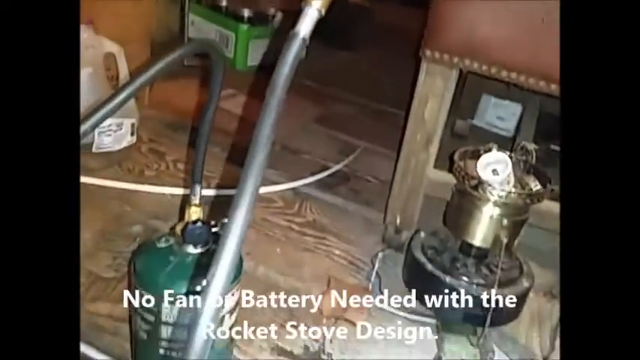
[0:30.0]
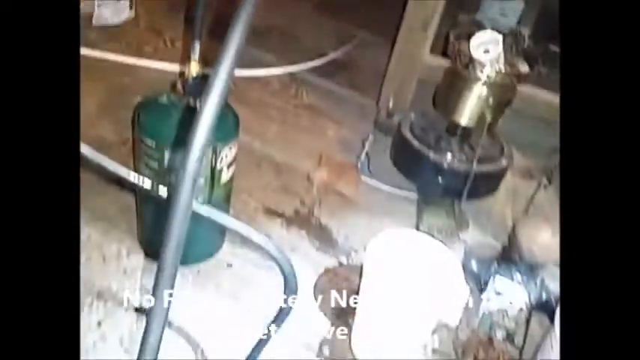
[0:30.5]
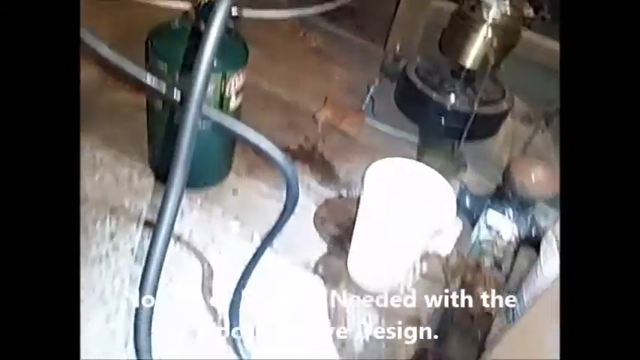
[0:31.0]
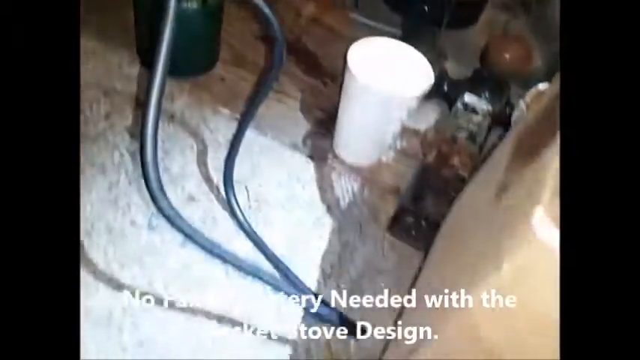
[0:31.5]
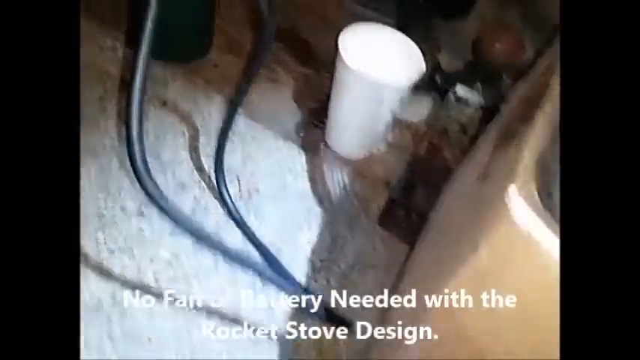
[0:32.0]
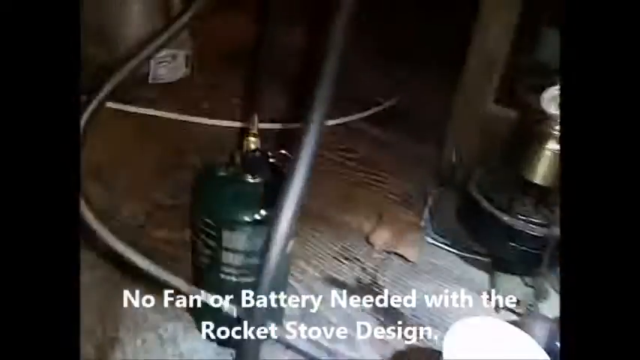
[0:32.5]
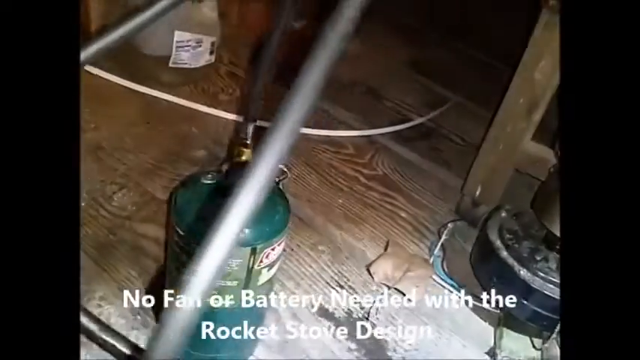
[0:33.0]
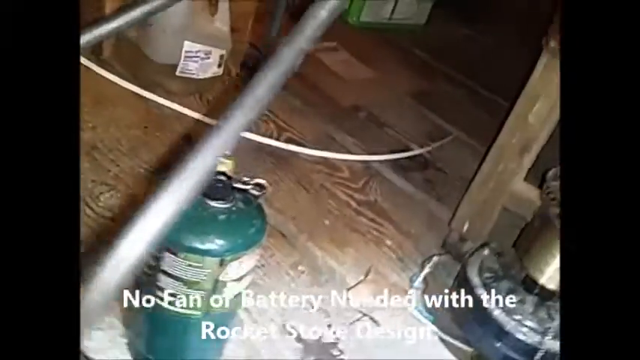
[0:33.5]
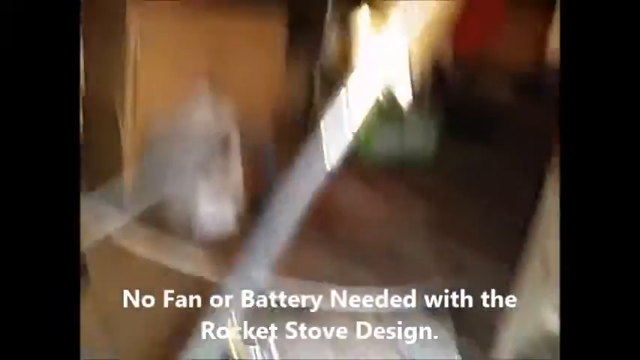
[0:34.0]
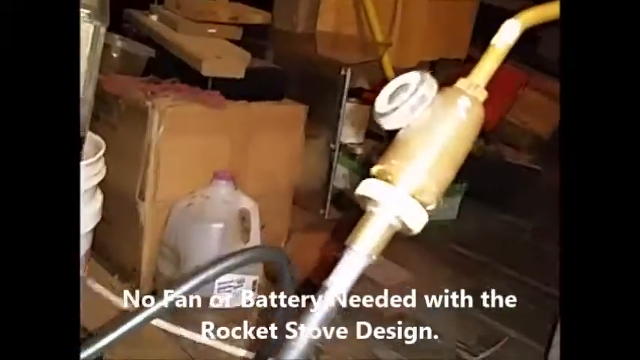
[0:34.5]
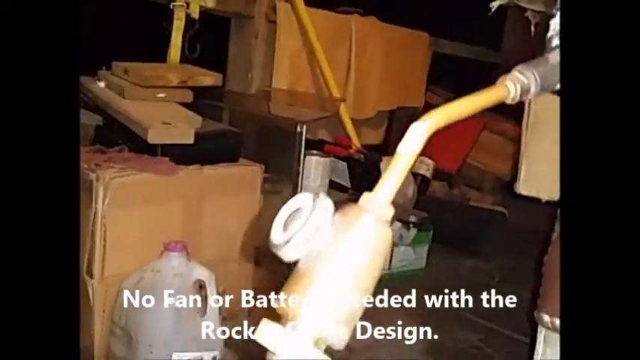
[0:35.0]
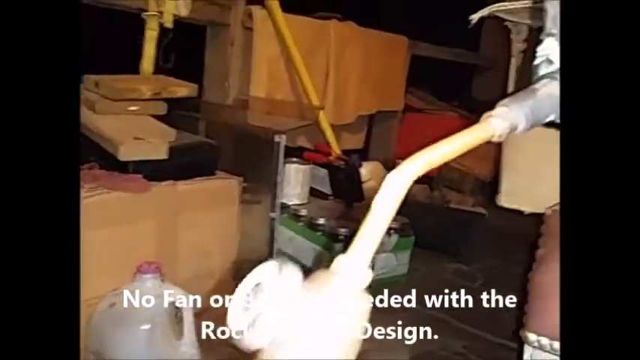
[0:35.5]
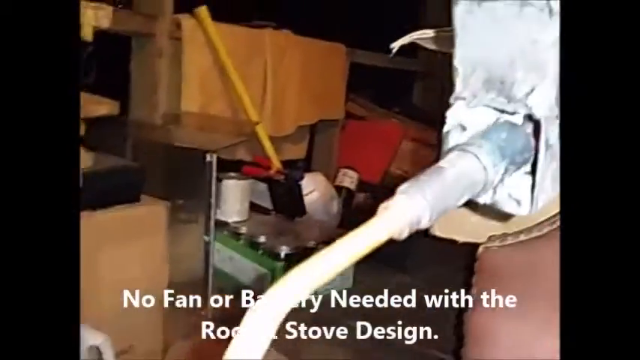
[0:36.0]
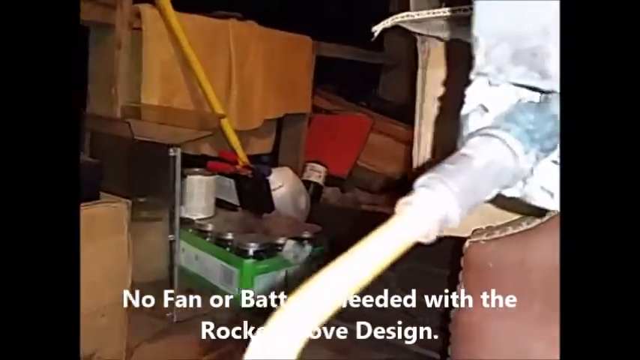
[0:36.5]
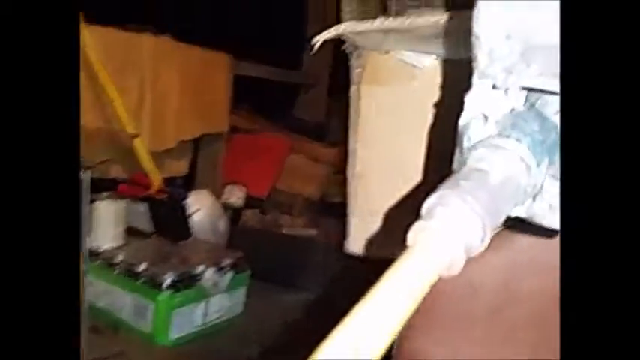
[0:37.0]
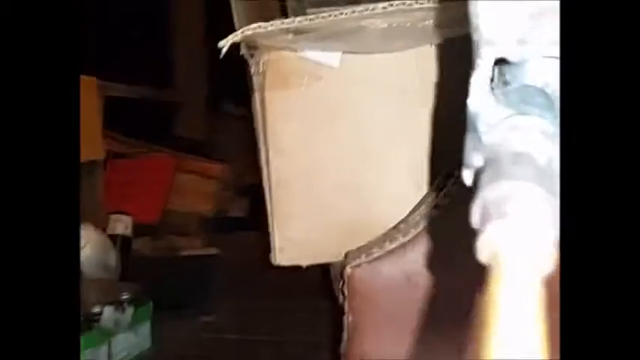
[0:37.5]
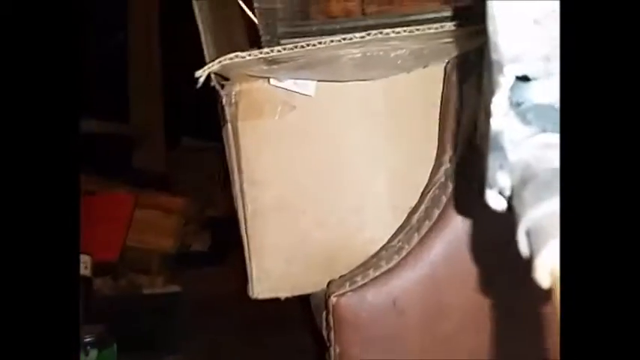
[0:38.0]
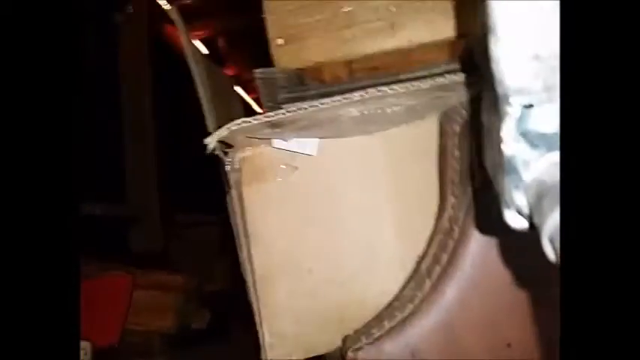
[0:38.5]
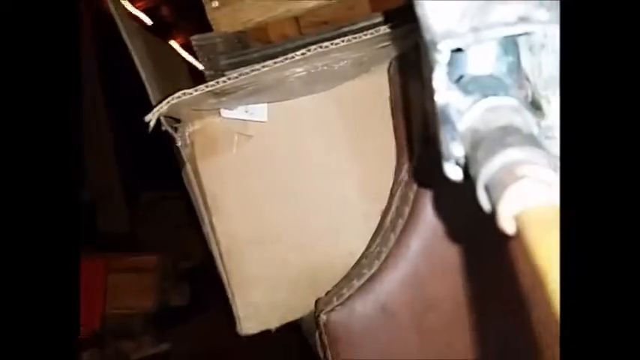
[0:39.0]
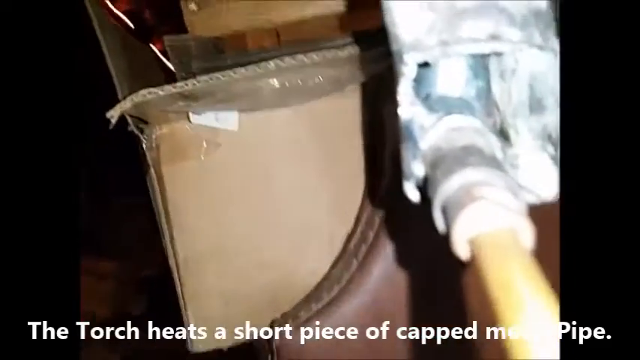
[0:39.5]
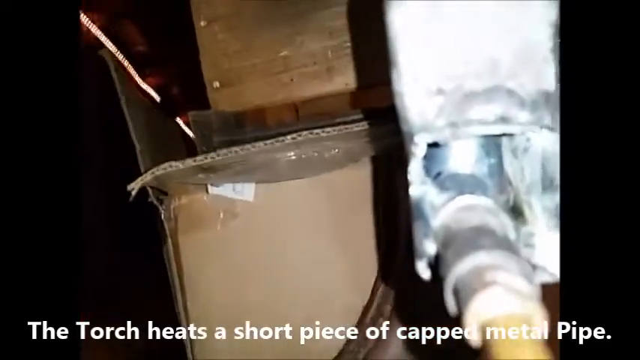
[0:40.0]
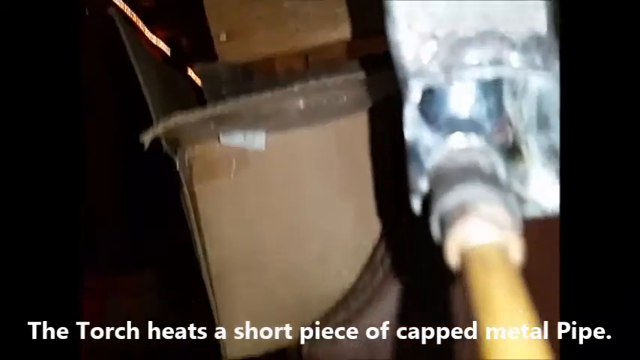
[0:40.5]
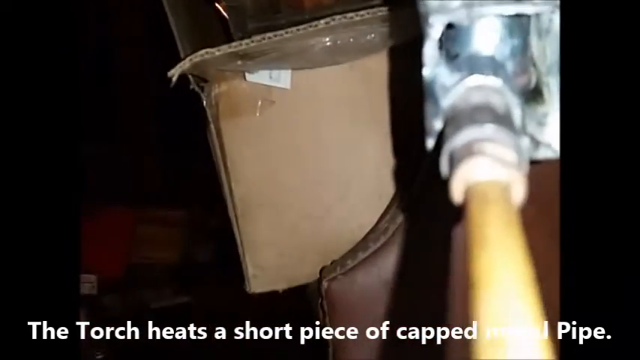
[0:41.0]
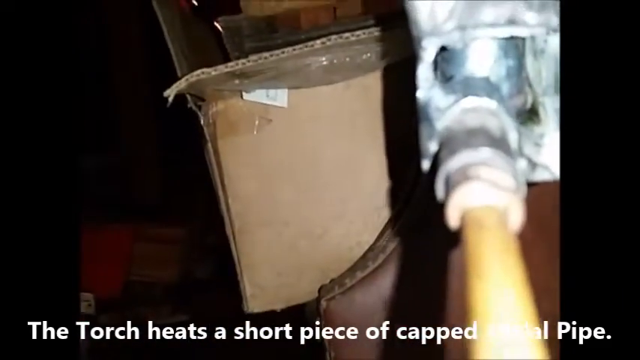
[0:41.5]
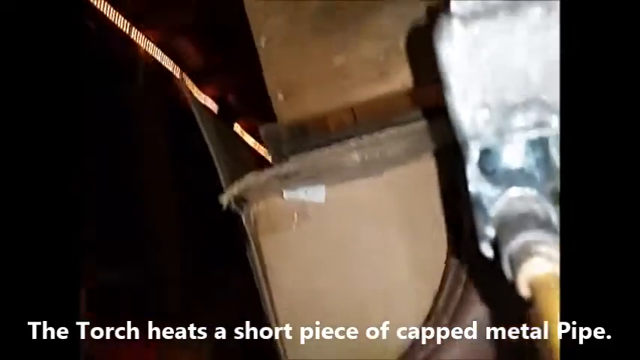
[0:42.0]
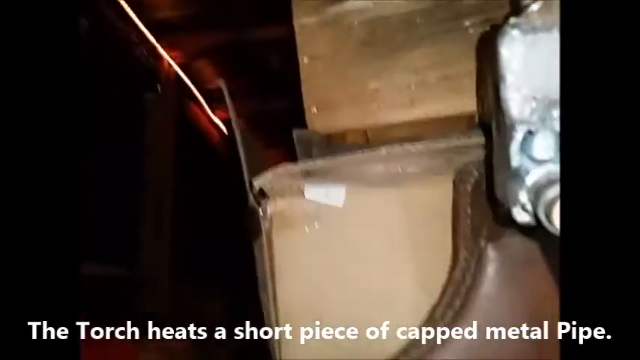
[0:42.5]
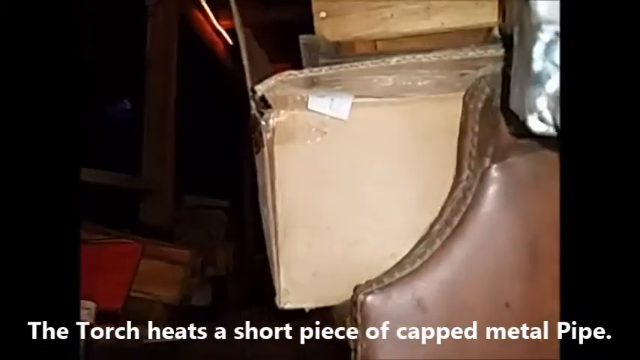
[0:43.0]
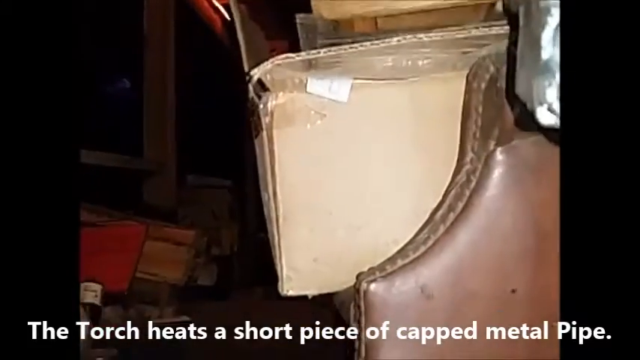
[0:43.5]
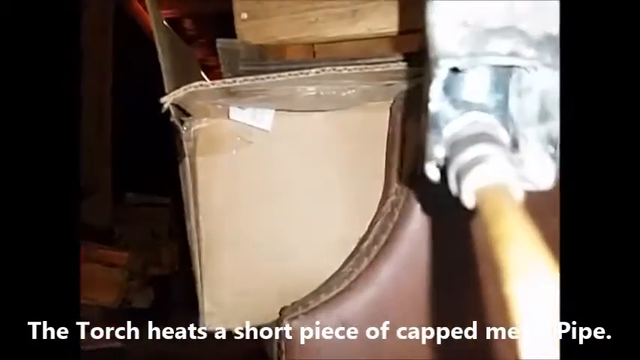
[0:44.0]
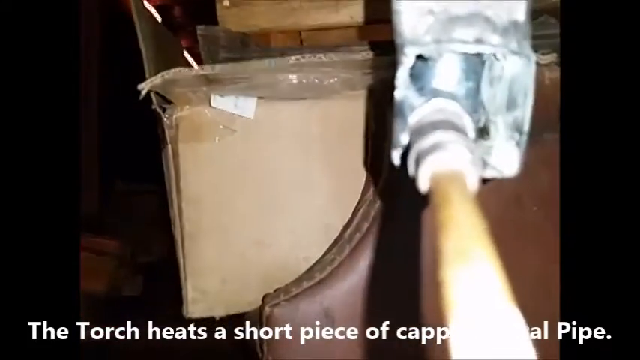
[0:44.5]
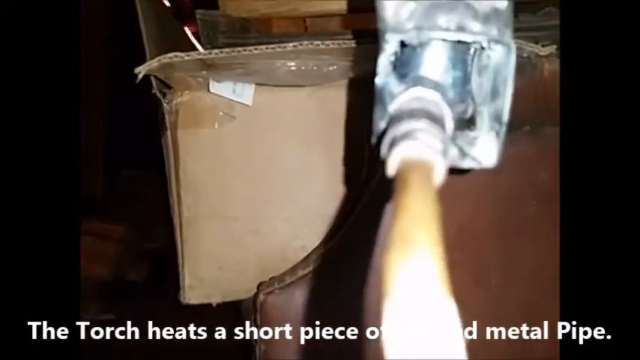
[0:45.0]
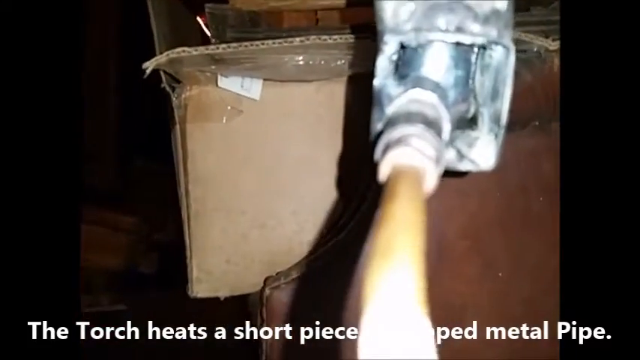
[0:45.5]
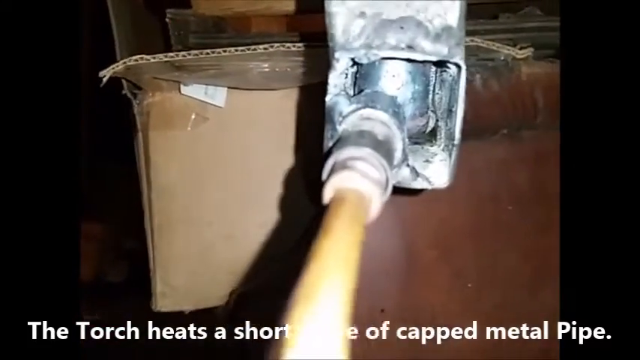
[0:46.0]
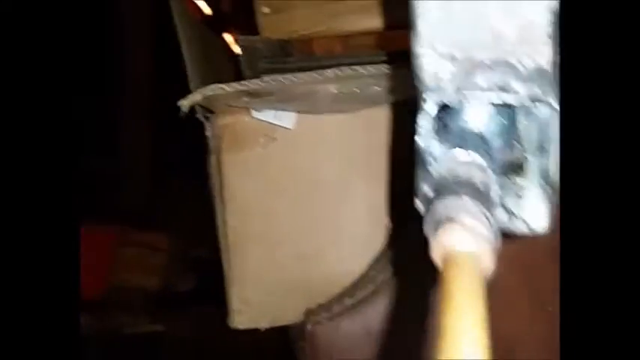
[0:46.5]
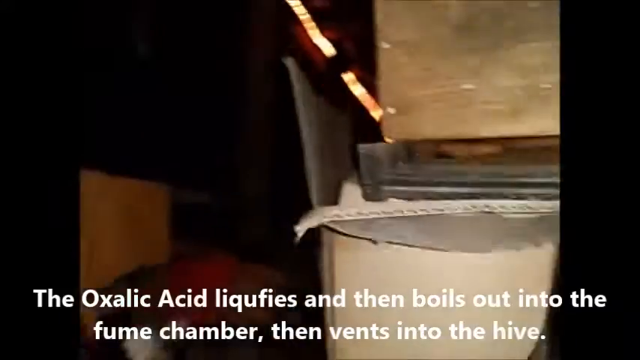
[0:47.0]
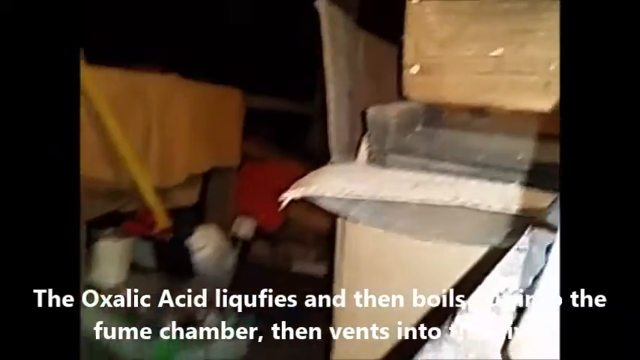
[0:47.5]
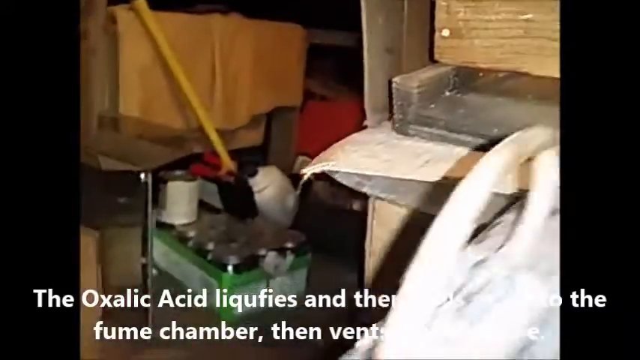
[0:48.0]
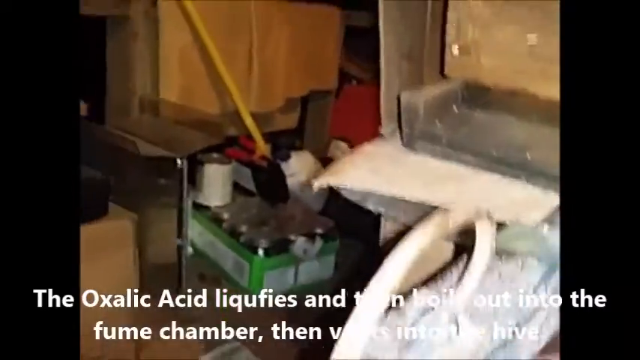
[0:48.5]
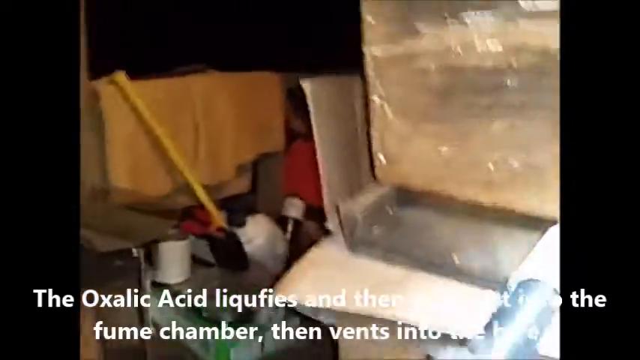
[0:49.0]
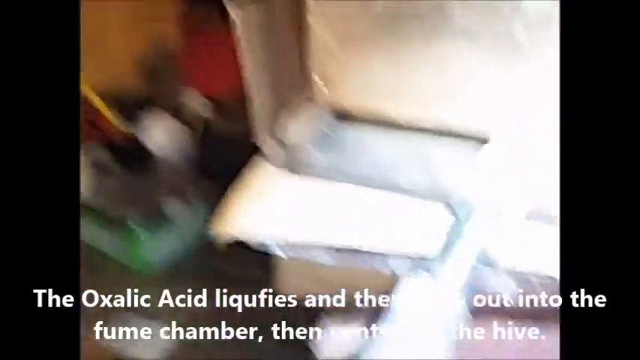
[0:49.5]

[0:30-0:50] Different pipes and canisters are on the floor, with different lines running into the canisters. A jug of some type of liquid is in the bottom left-hand corner of the screen. The camera gets very close to the pipe and then shows the sides of the boxes. The subtitles read "no fan or battery needed with the rocket stove design. The torch heats a short piece of capped metal pipe." followed by a line beginning "oxalic acid liquefies." The camera moves in a very jerky way. The floor is an old wooden floor, with various pieces of equipment lying around, and the area looks dirty and dusty.